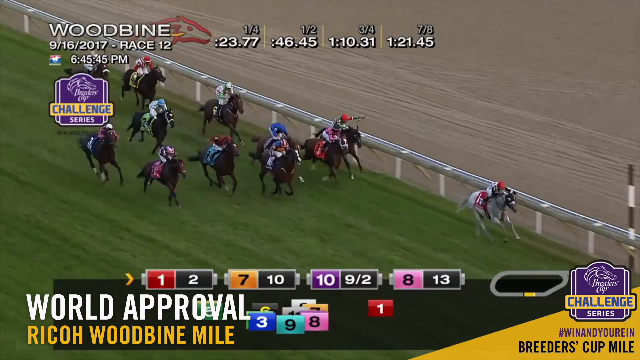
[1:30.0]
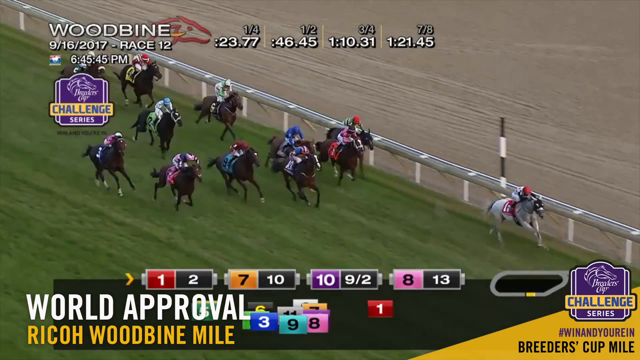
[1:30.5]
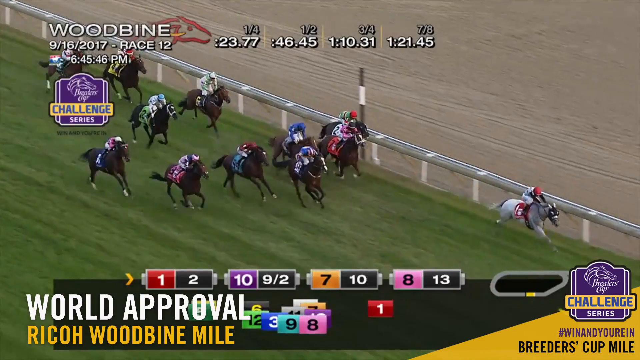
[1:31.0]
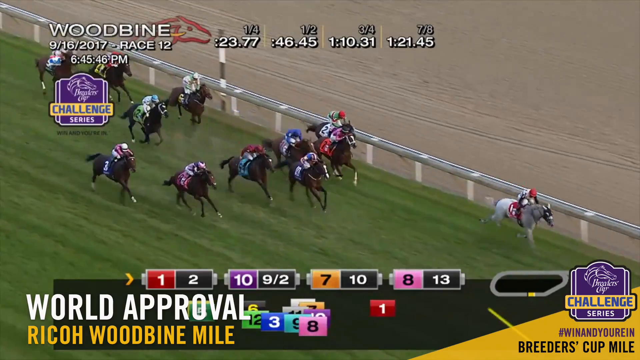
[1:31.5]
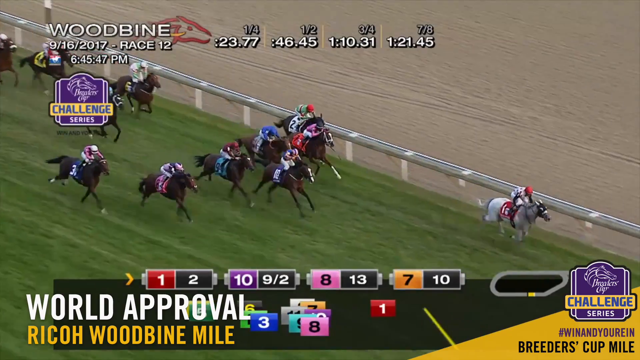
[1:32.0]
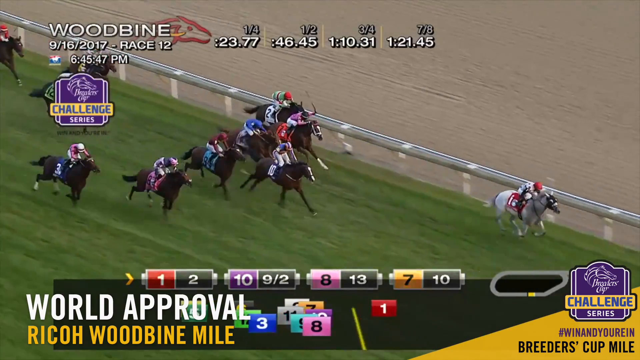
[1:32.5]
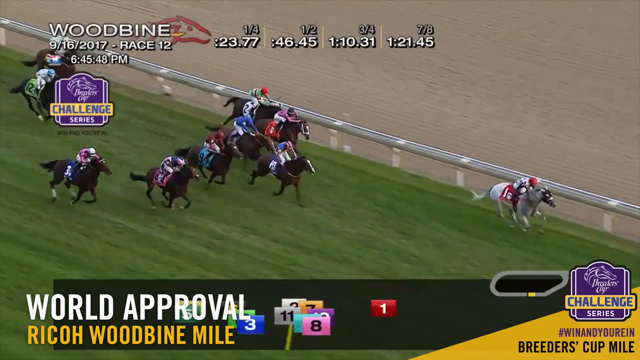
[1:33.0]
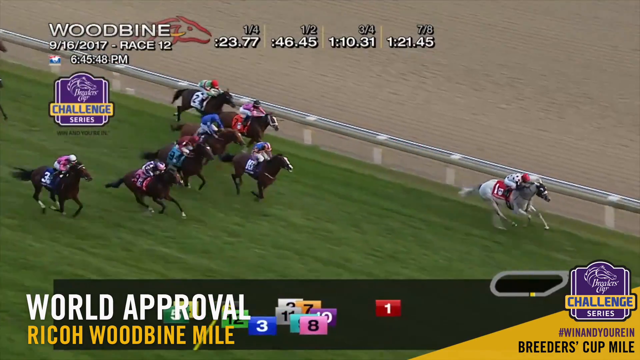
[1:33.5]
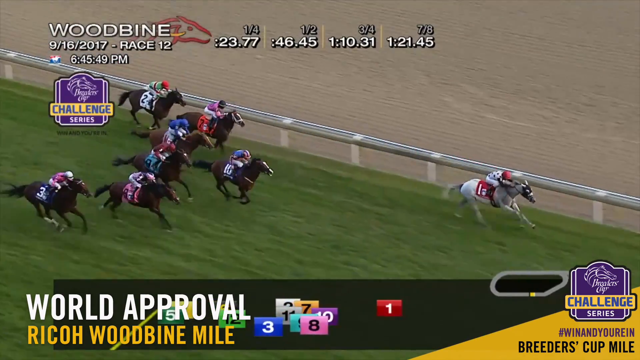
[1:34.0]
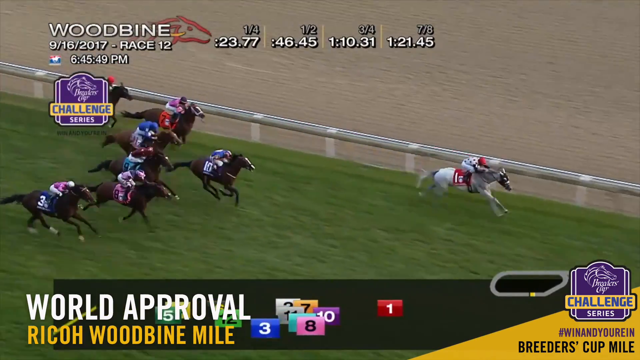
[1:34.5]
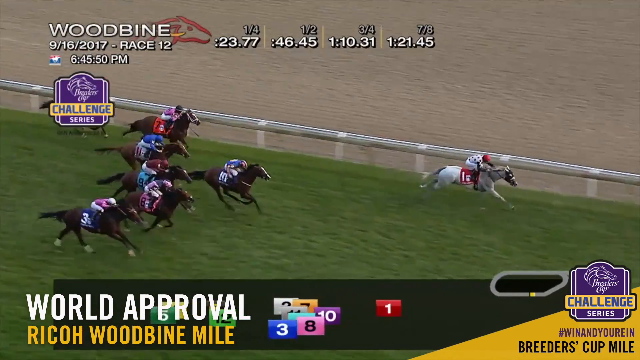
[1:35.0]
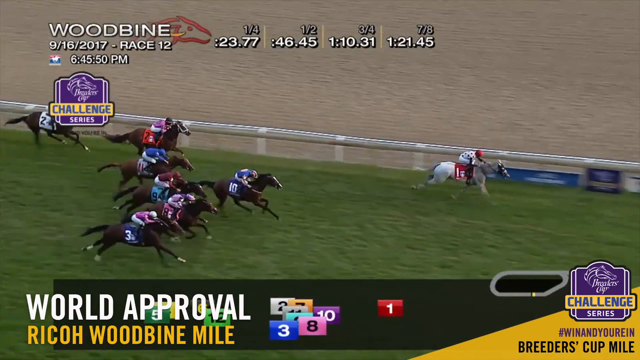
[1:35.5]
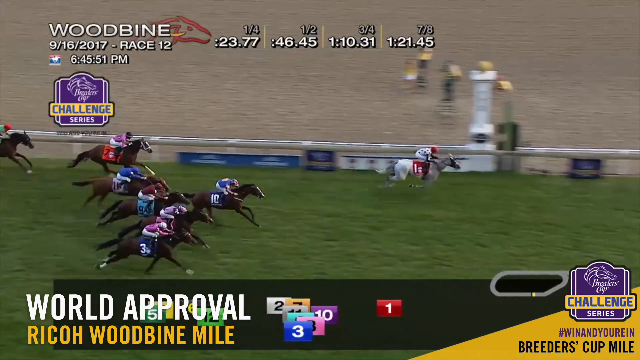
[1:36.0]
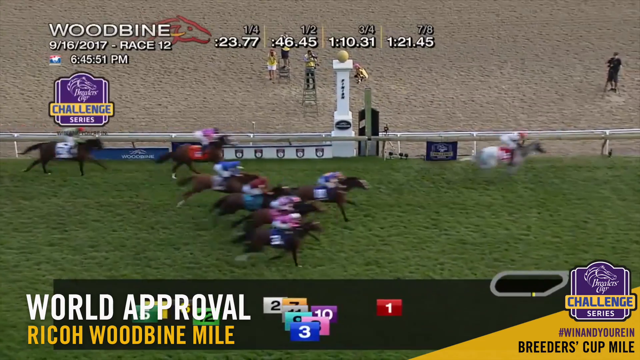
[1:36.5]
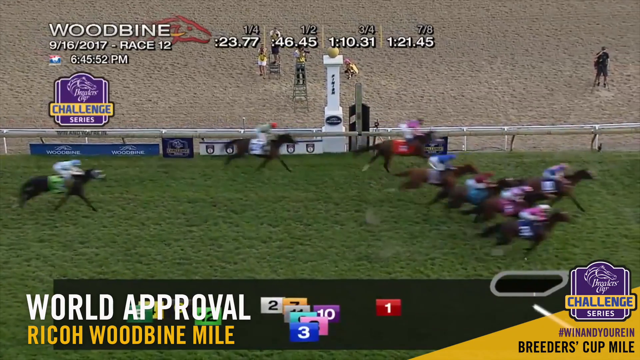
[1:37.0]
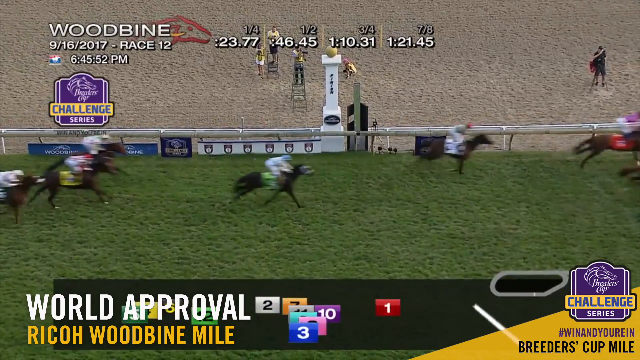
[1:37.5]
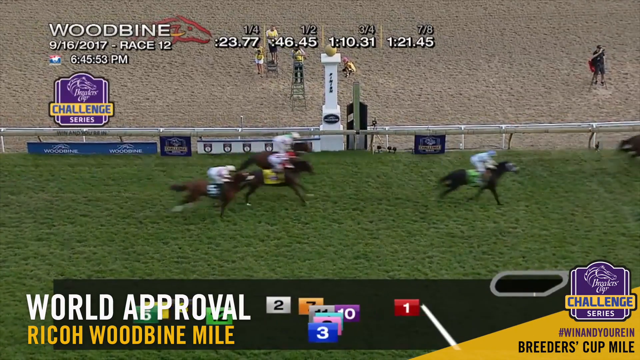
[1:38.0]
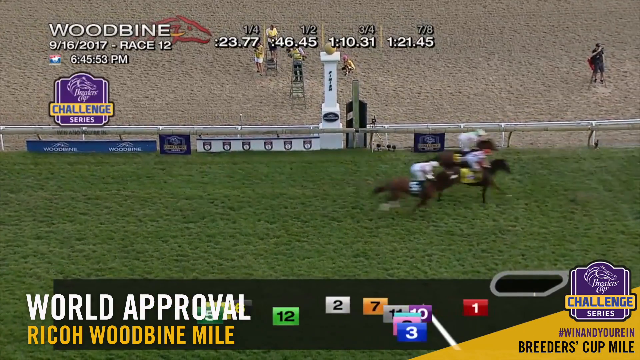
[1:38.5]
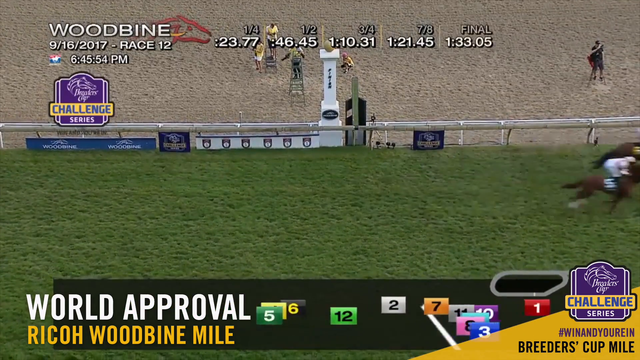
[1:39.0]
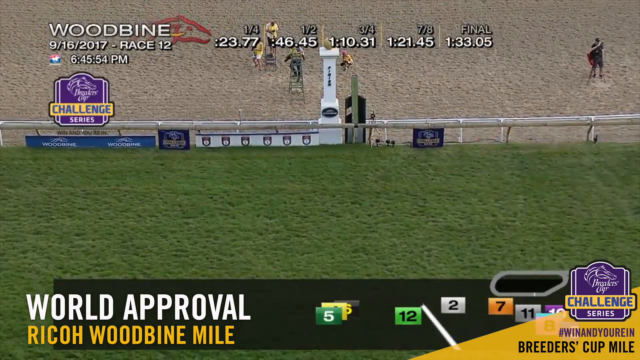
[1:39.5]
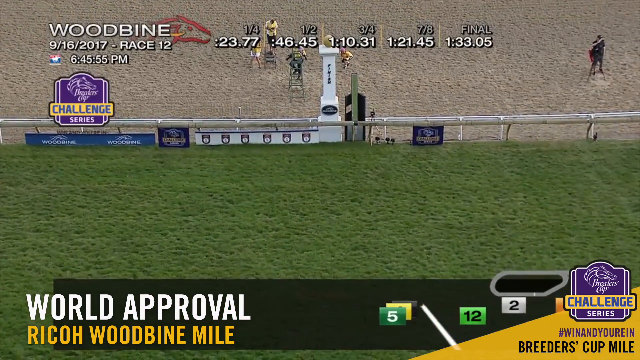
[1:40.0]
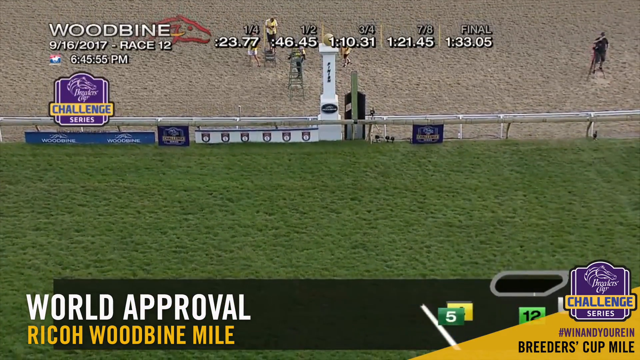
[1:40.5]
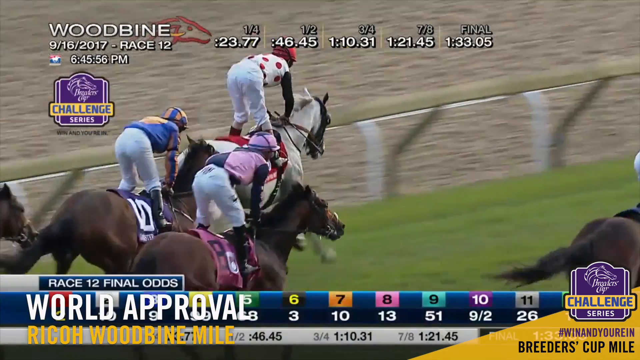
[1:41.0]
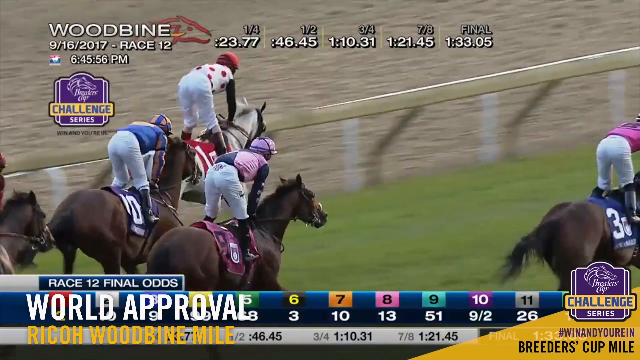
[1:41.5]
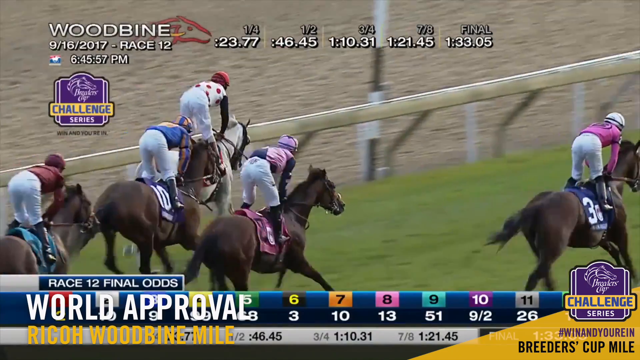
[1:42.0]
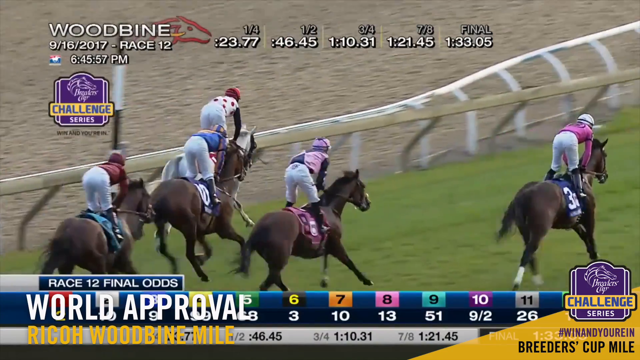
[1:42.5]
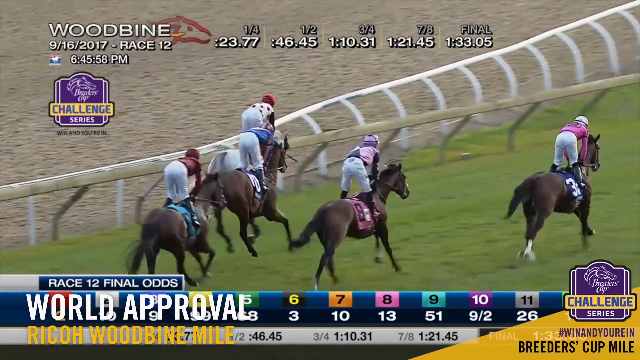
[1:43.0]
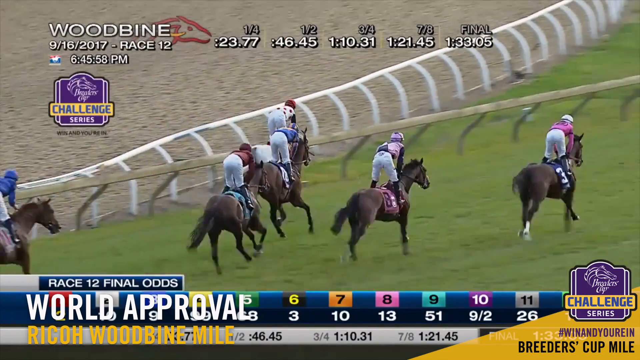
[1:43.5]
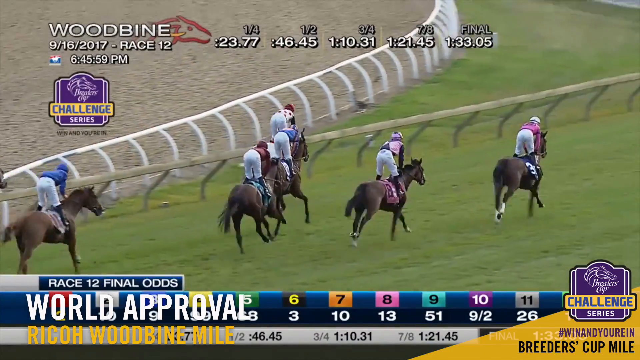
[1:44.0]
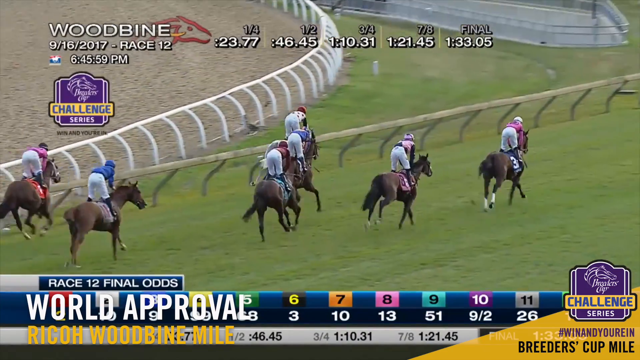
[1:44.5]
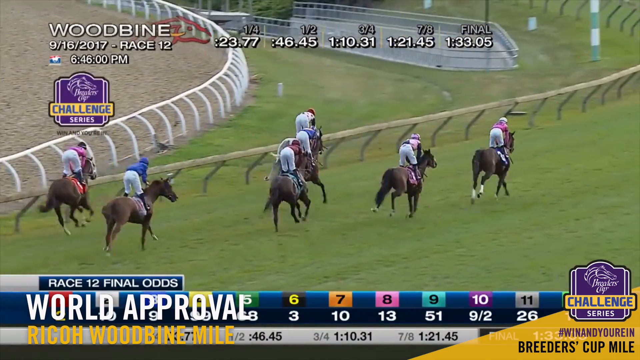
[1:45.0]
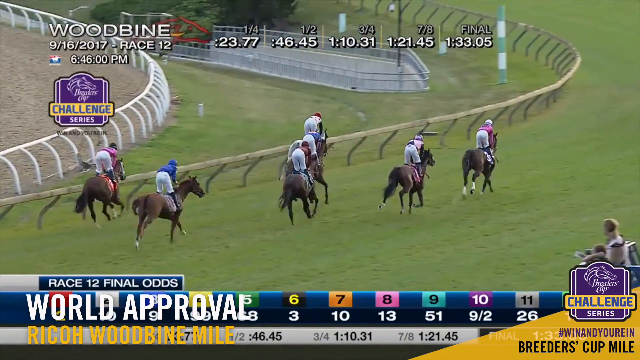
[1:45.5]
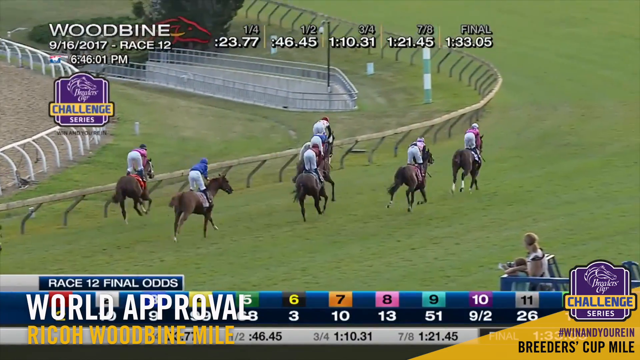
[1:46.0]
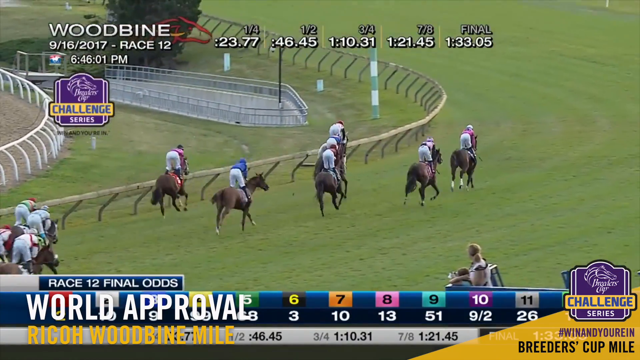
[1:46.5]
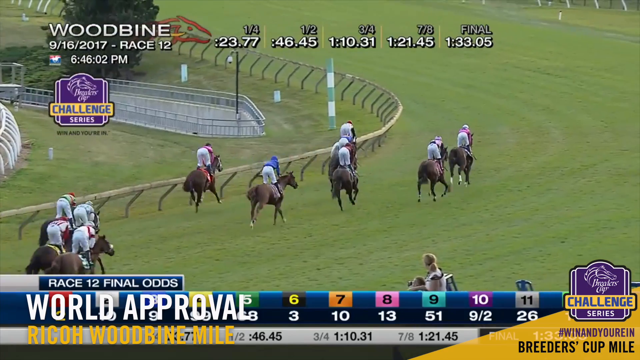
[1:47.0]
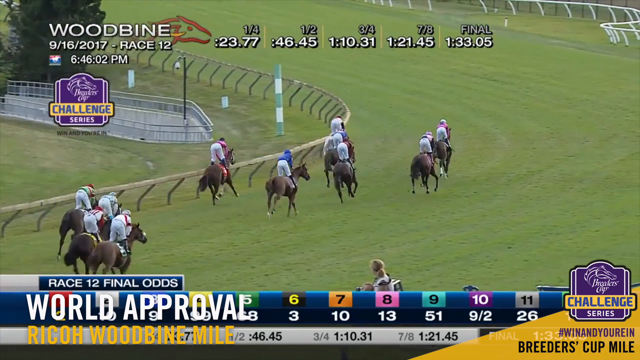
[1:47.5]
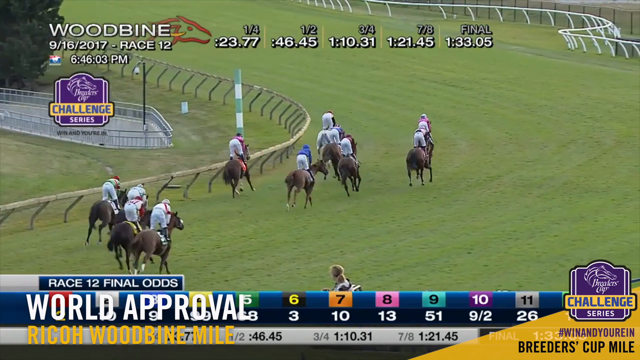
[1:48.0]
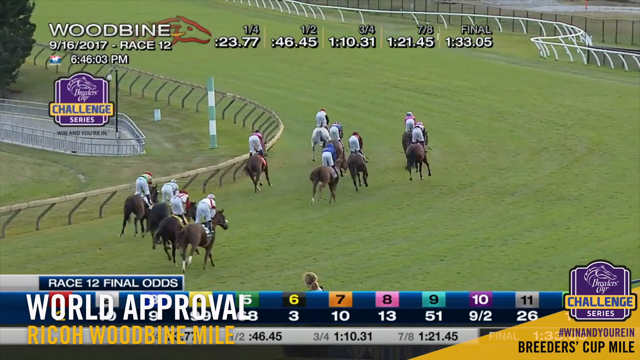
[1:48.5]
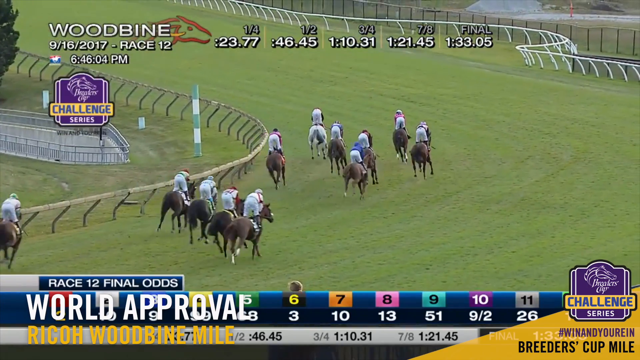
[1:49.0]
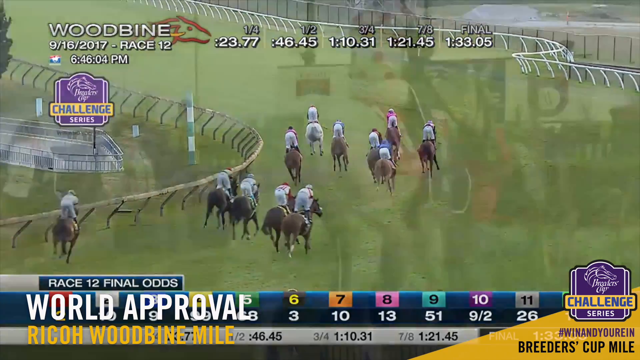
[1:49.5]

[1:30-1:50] The horses and riders continue competing and appear to reach the finish line, apparently marked by the white post on the left, as they come down the straight. Number one, still in the lead, with the jockey in the spotted jersey, the mostly white horse and the red saddle, comes in first place. The jersey apparently has red spots. The other 11 riders come in after. Right at the end, there is a close-up from behind the winning horse and rider. Pink number eight appears to have finished a little better after being last for most of the race. Towards the bottom of the screen, what appear to be the final odds, apparently for betting, are shown. At the top, the screen shows "1 quarter, 1 half, 3 quarters, 7 eighths".